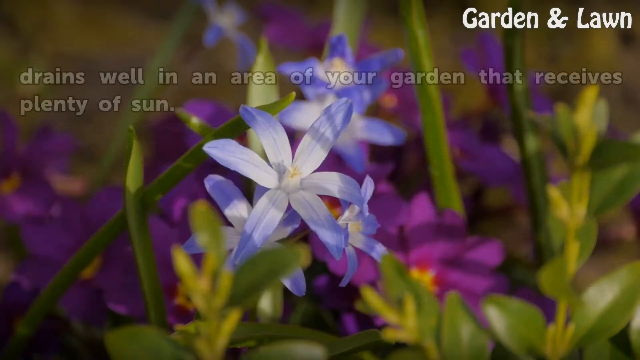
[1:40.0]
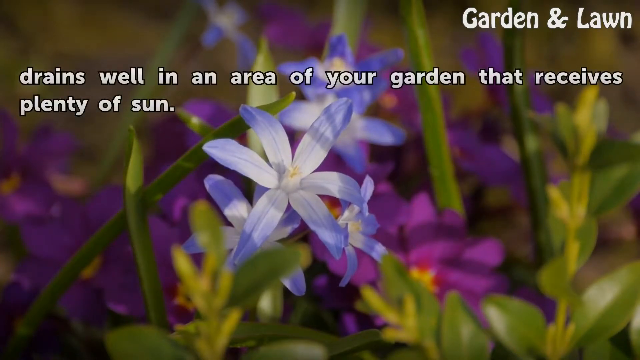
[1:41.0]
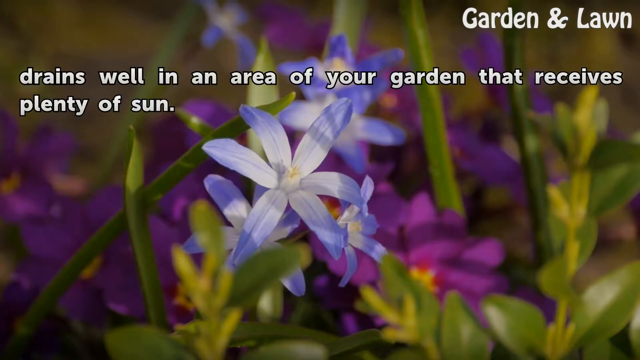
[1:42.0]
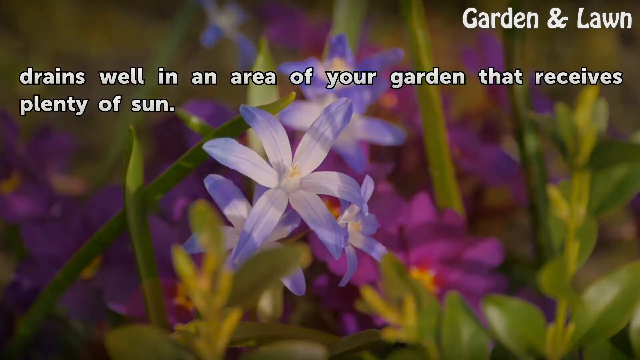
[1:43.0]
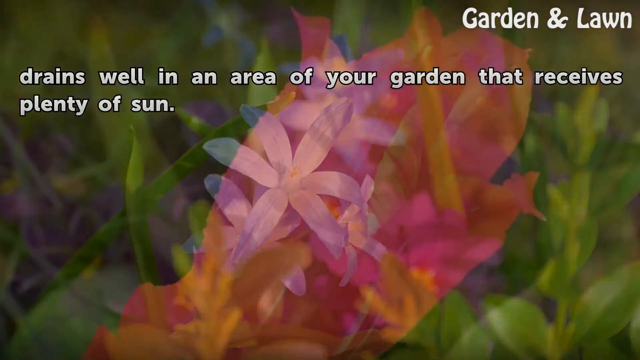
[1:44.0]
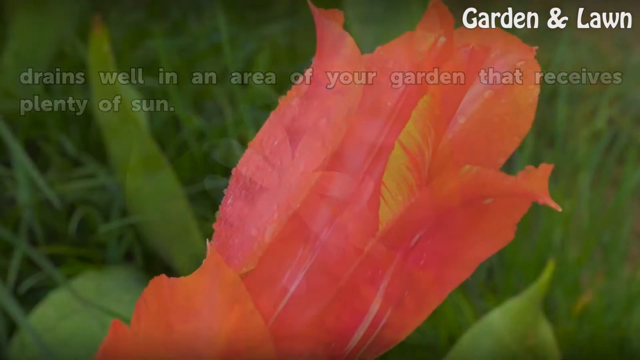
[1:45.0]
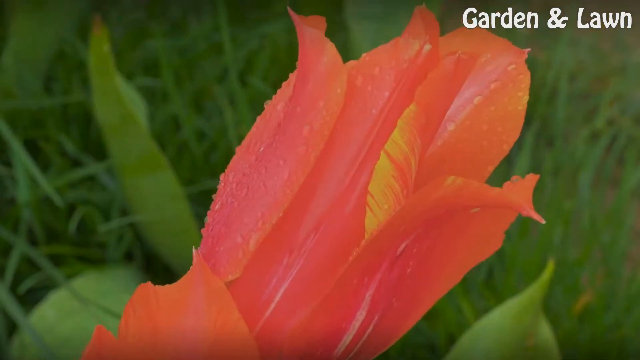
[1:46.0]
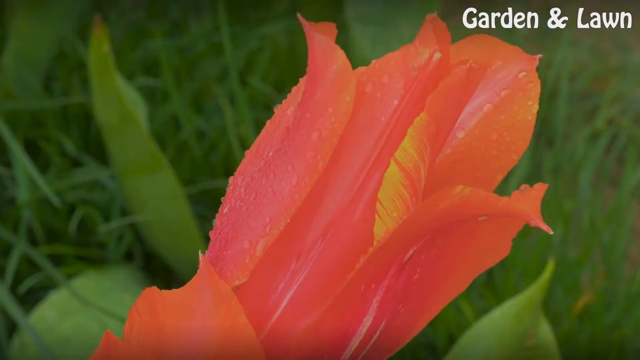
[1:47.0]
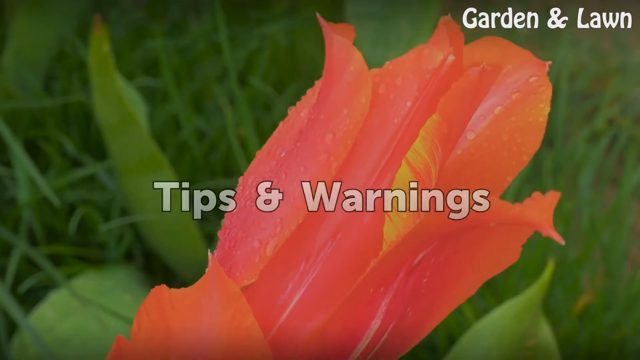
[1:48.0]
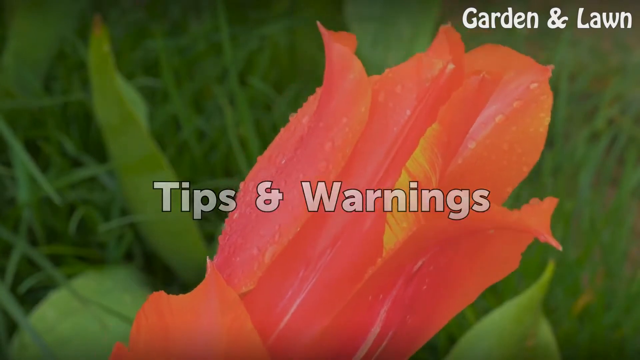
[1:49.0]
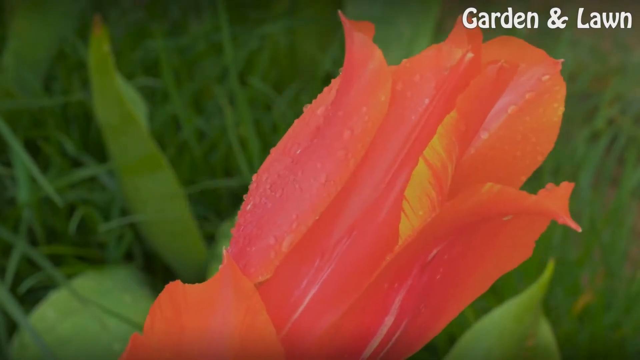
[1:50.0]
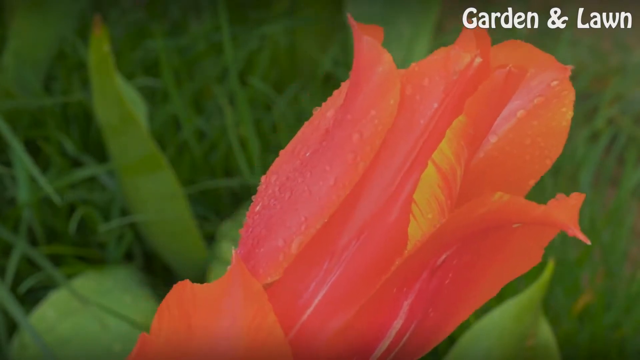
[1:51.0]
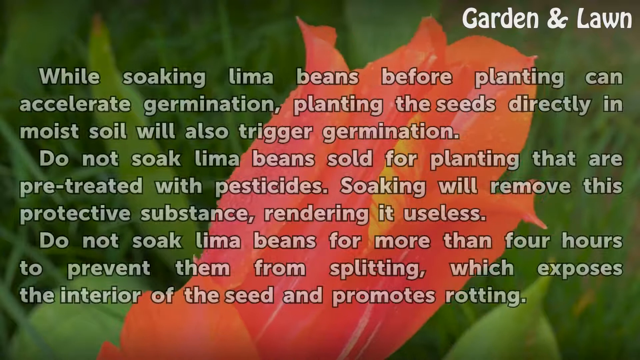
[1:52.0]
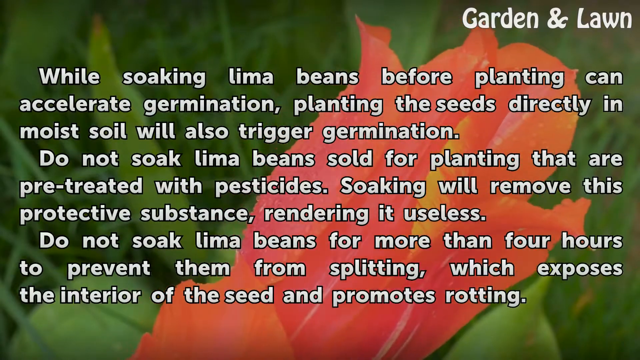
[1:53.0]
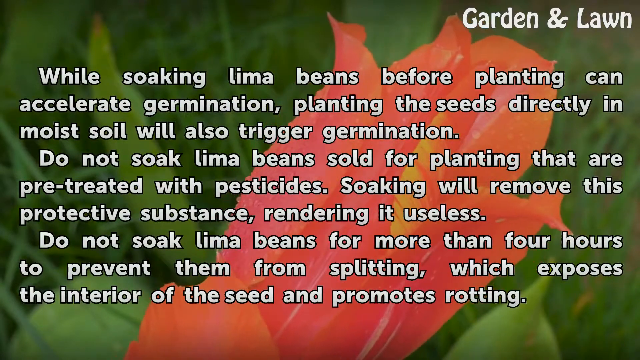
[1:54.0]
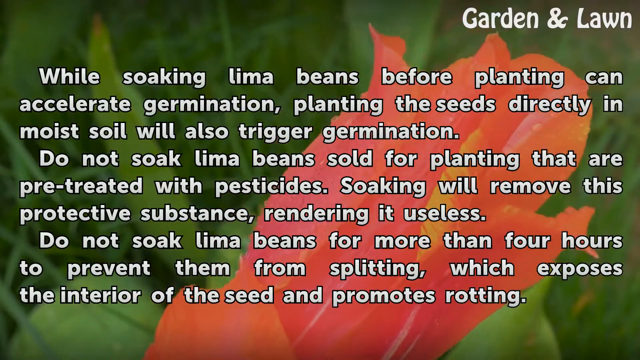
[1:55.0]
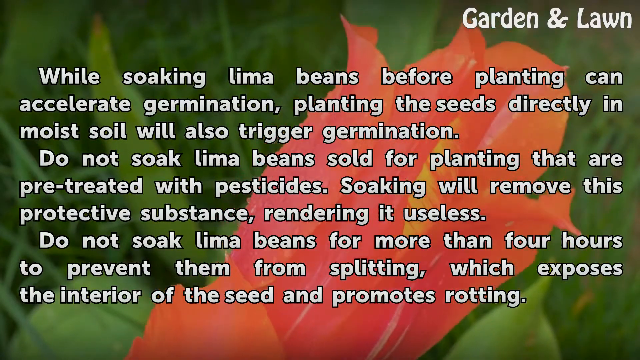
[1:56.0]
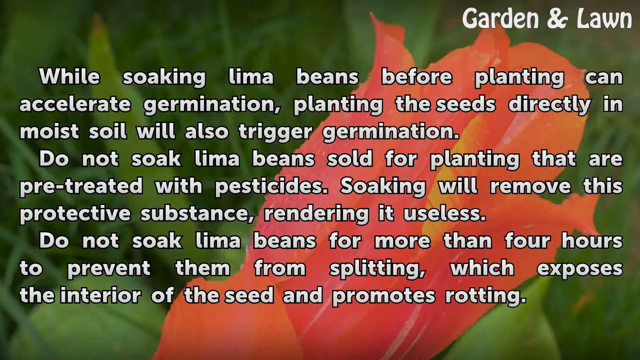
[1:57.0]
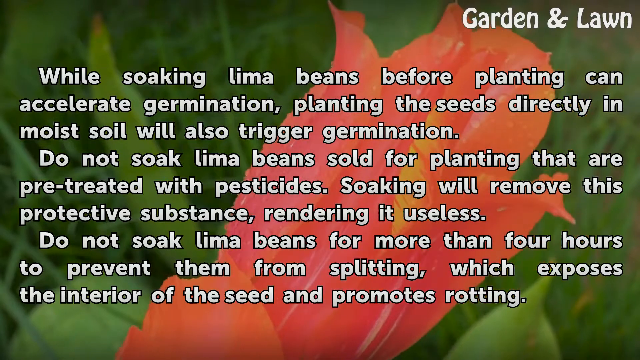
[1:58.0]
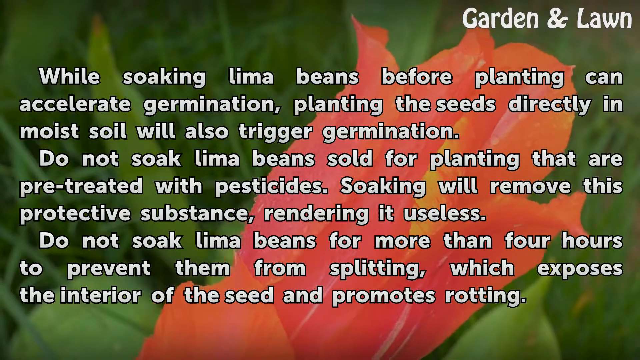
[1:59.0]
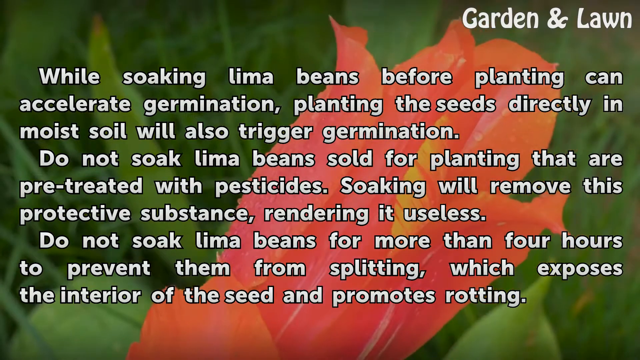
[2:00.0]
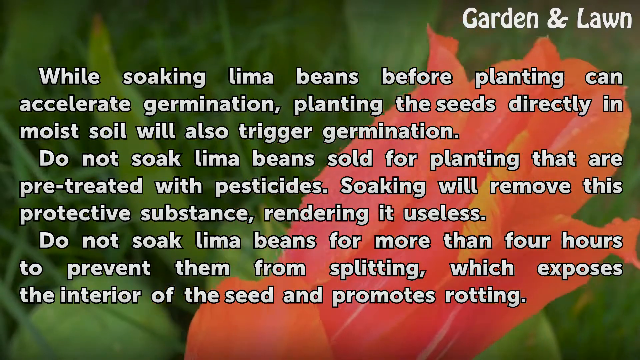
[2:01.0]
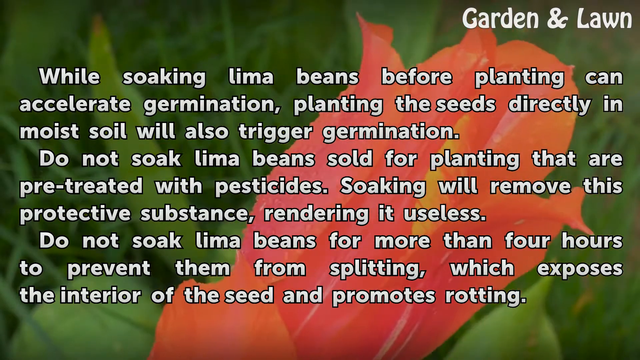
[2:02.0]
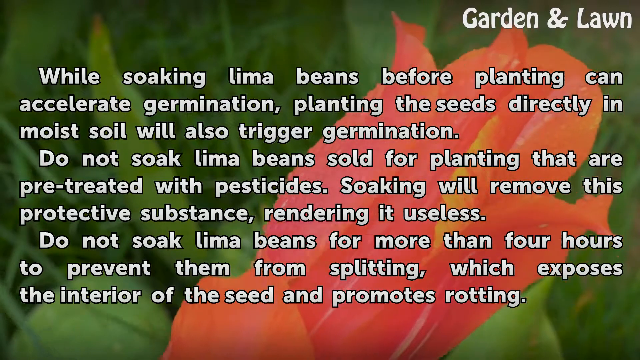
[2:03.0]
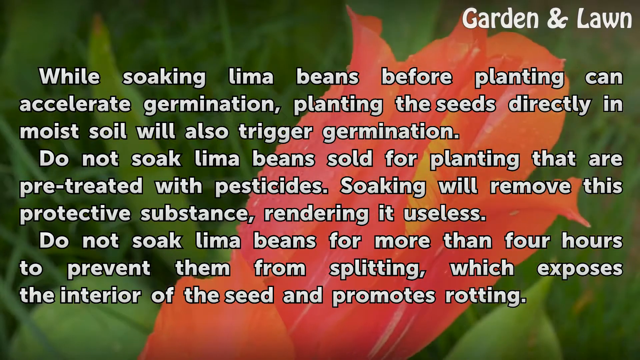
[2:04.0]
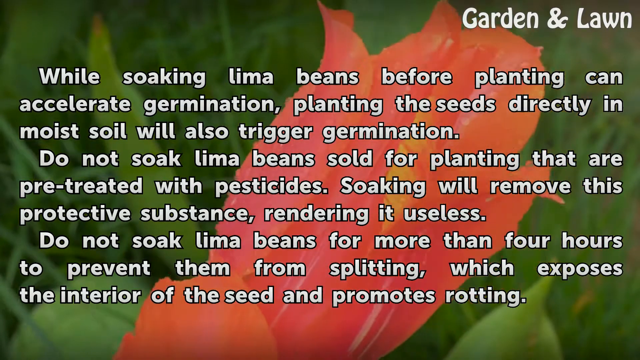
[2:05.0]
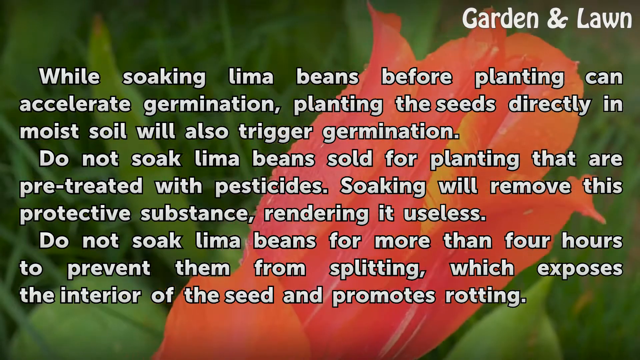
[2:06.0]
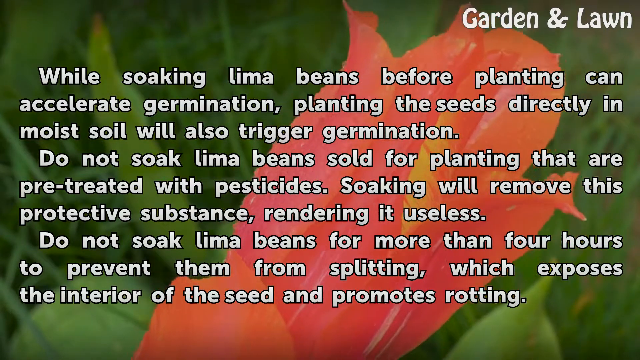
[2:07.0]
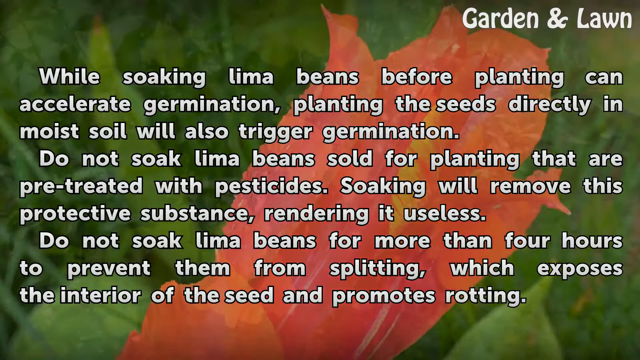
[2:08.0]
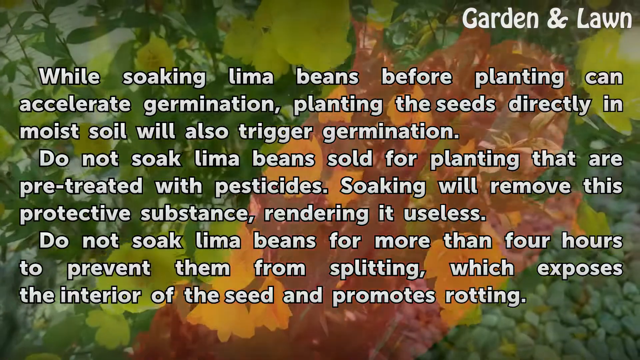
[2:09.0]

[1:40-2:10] The instructions finish by saying the seeds should be planted in an area of the garden that receives plenty of sun. In the background are a couple of what appear to be lima bean gardens, their petals and pods waving in a light breeze. The video then zooms in to a particular flower; there are red flowers among the lima bean plants.